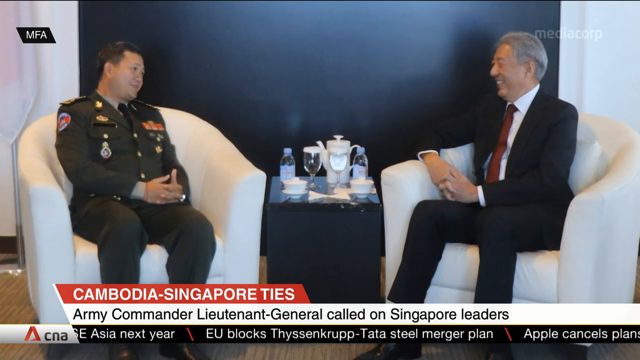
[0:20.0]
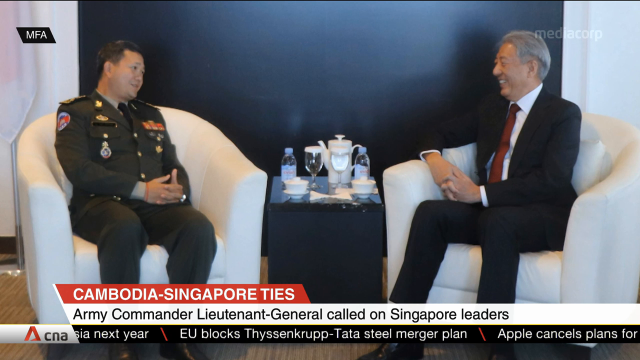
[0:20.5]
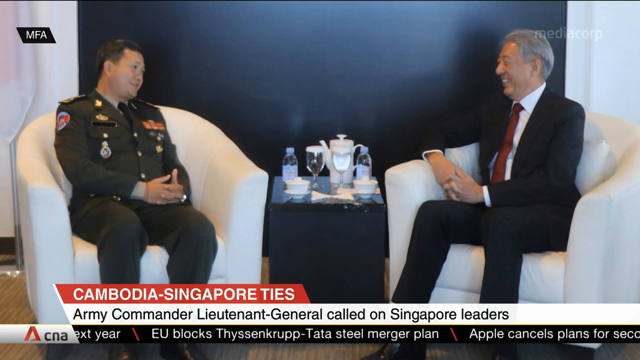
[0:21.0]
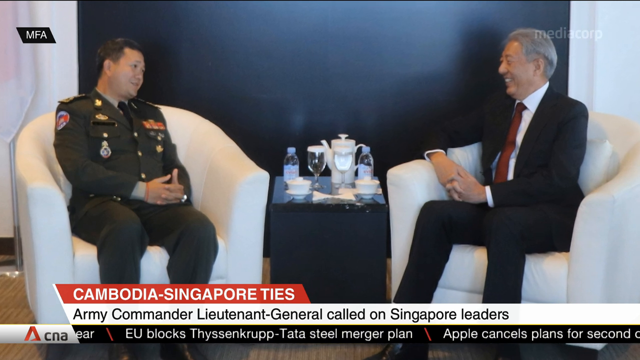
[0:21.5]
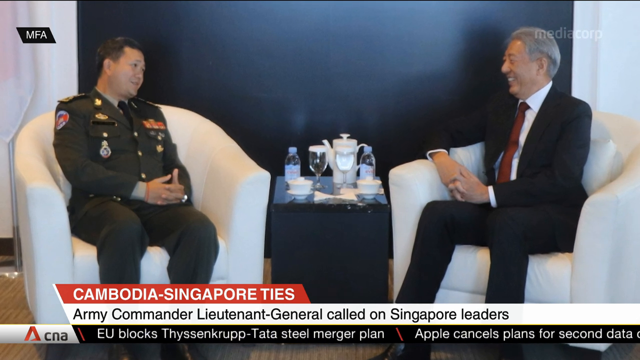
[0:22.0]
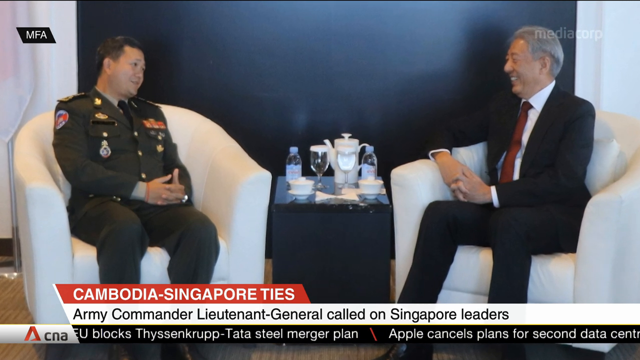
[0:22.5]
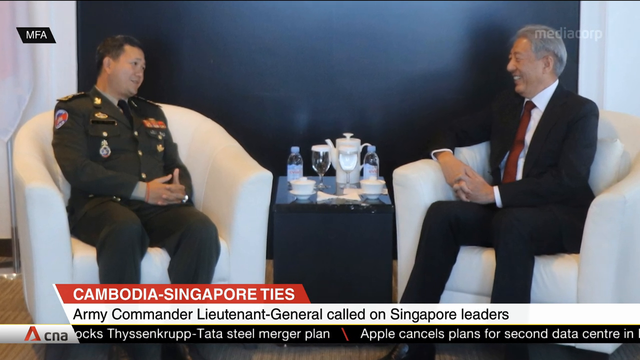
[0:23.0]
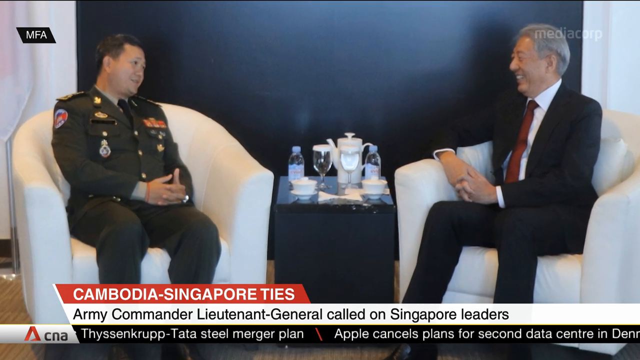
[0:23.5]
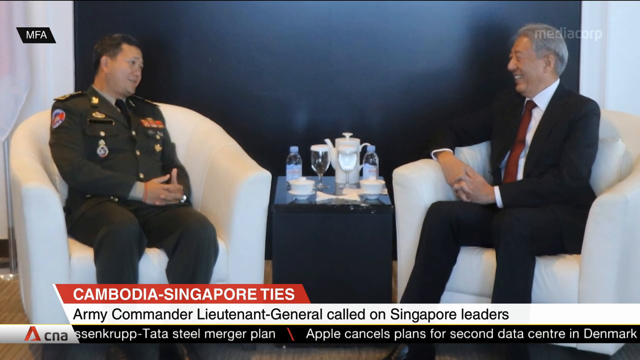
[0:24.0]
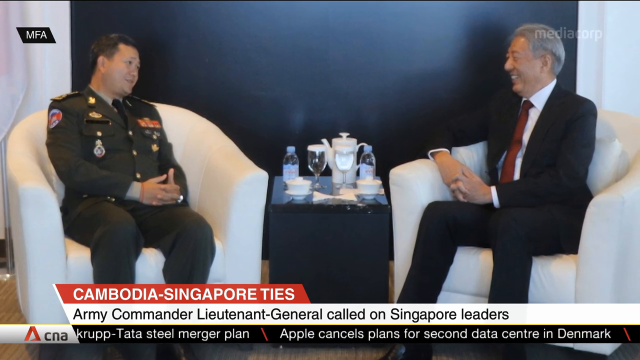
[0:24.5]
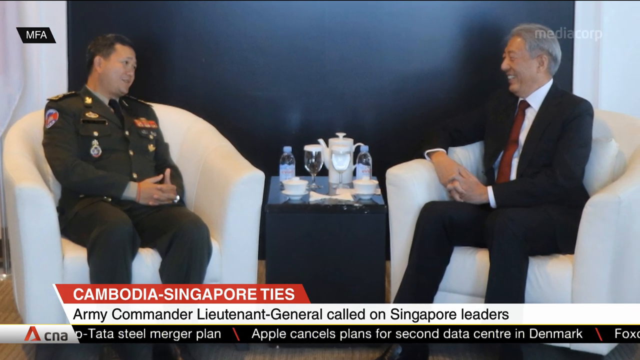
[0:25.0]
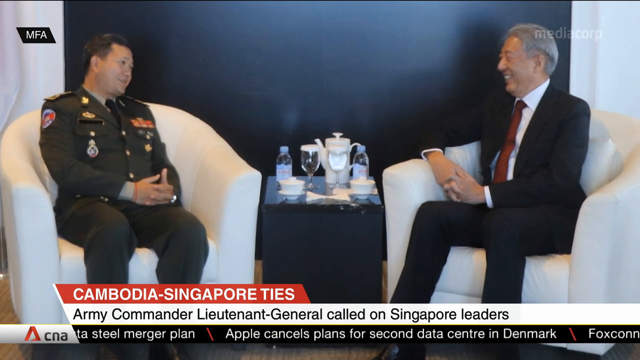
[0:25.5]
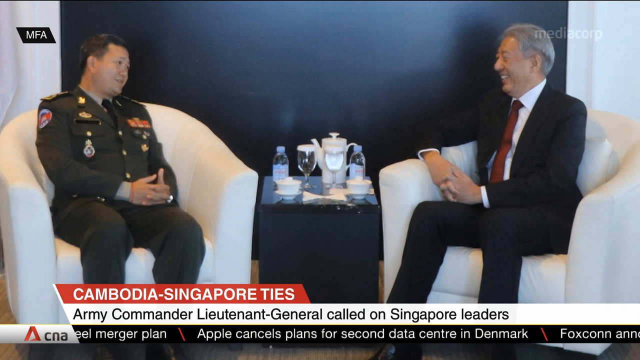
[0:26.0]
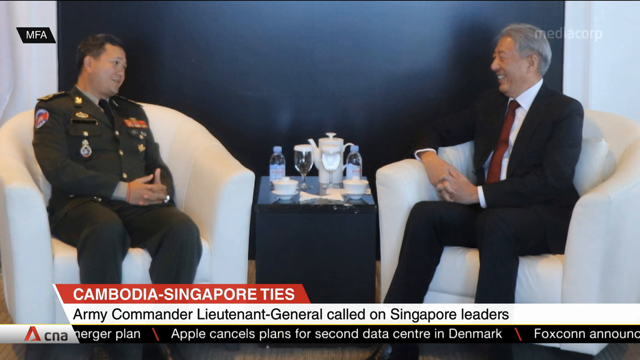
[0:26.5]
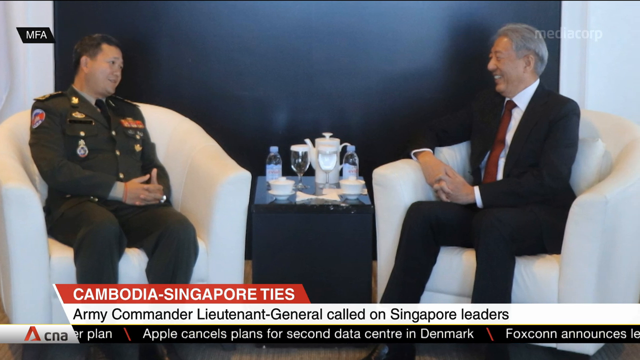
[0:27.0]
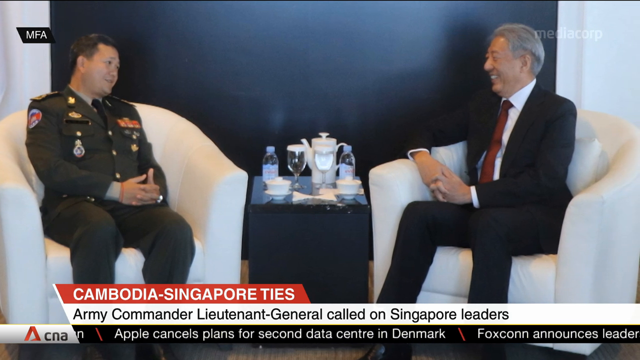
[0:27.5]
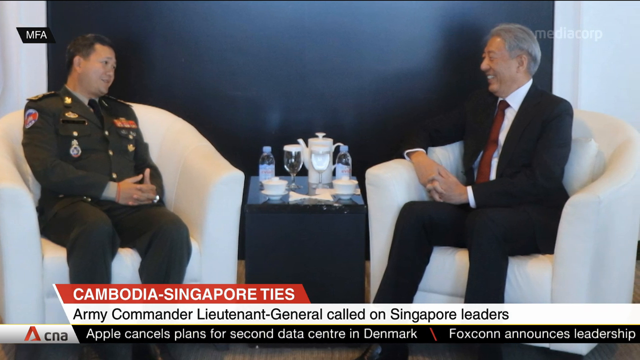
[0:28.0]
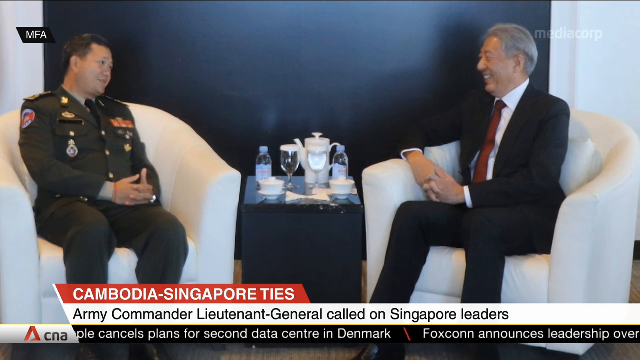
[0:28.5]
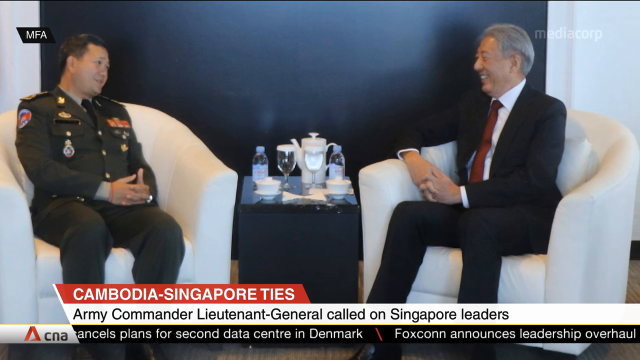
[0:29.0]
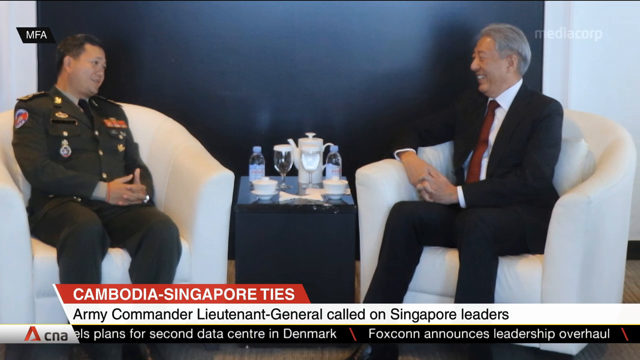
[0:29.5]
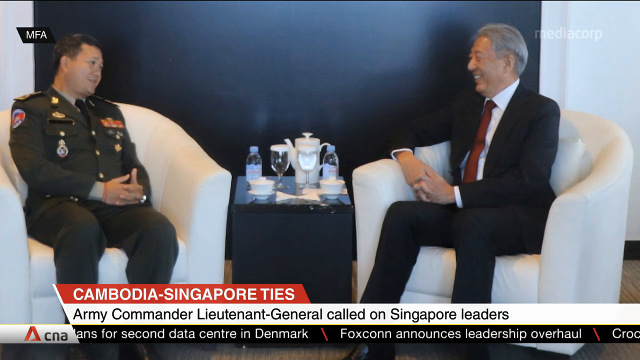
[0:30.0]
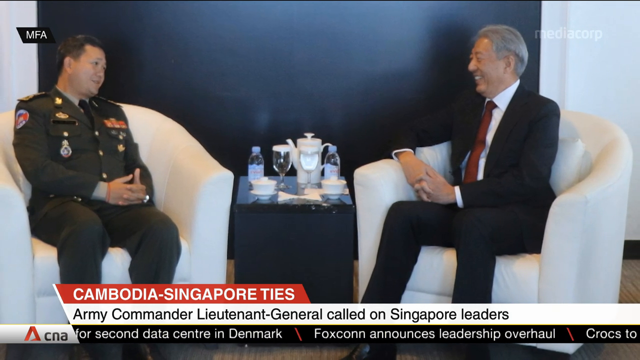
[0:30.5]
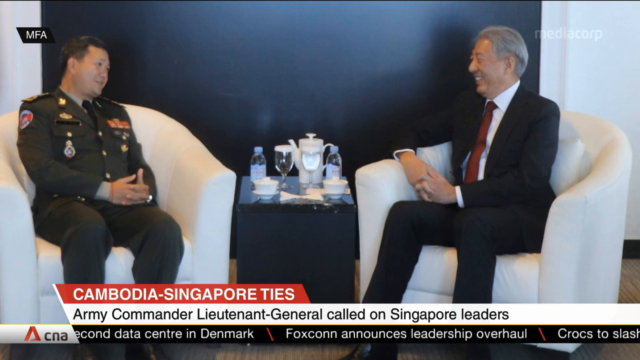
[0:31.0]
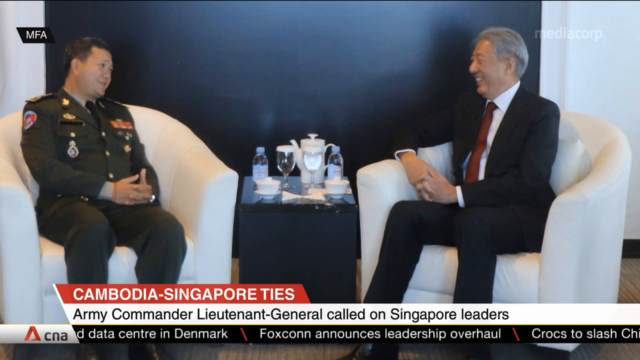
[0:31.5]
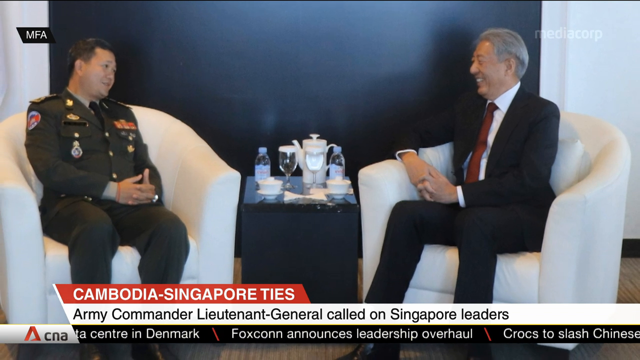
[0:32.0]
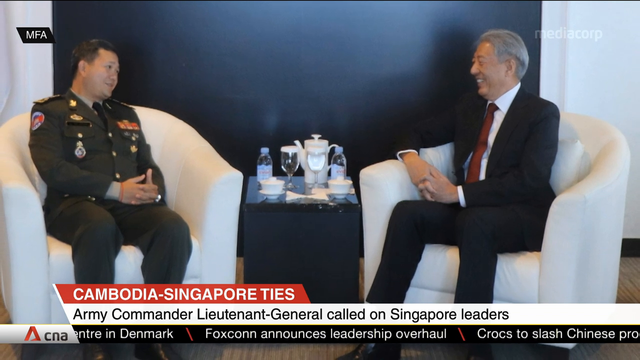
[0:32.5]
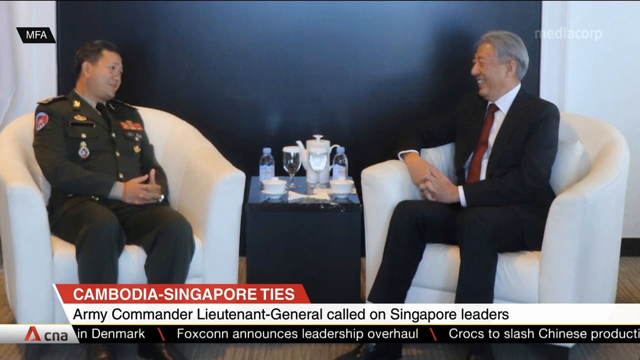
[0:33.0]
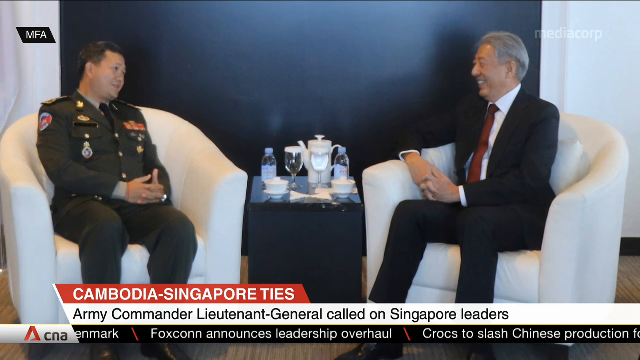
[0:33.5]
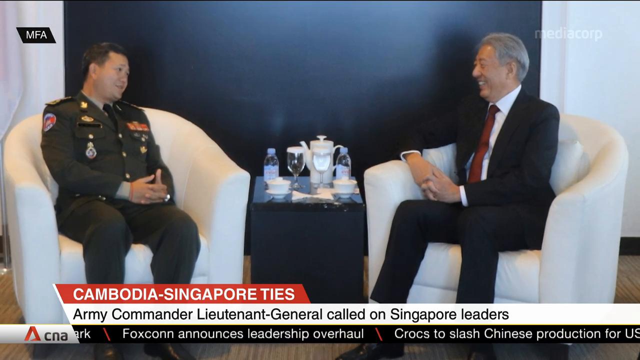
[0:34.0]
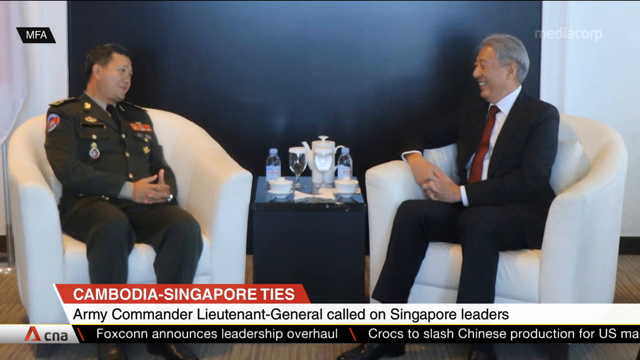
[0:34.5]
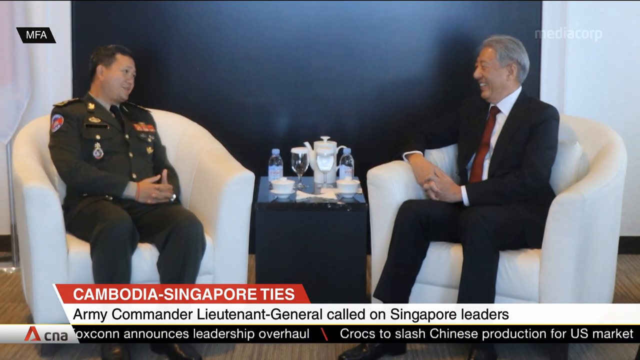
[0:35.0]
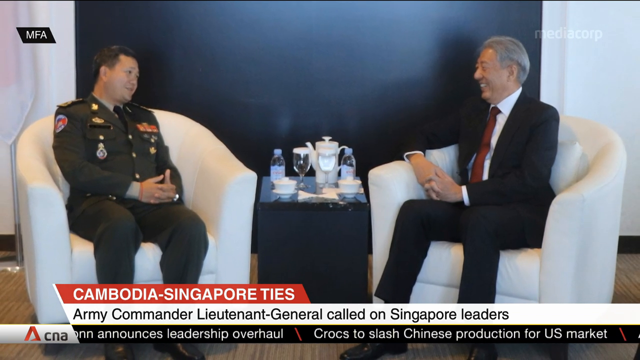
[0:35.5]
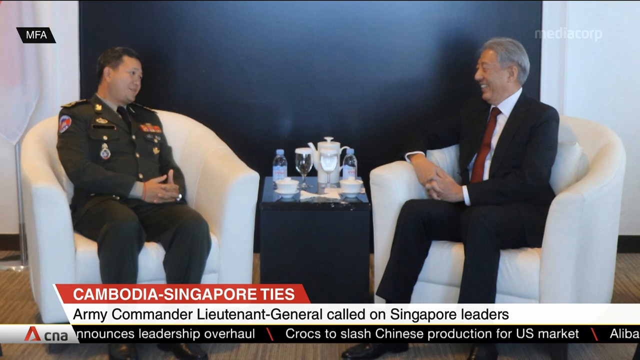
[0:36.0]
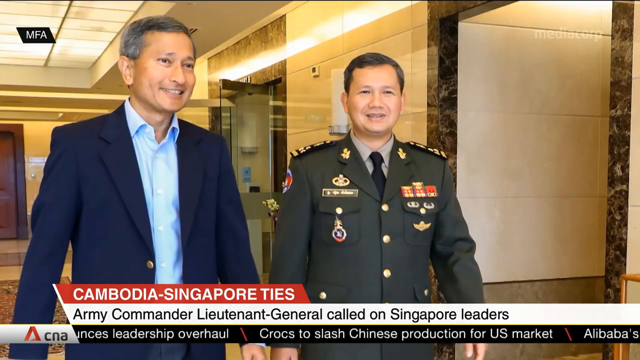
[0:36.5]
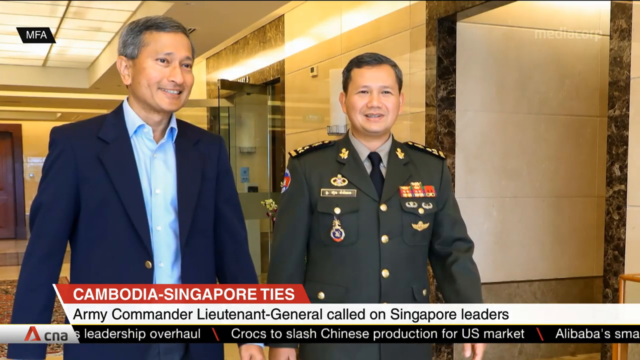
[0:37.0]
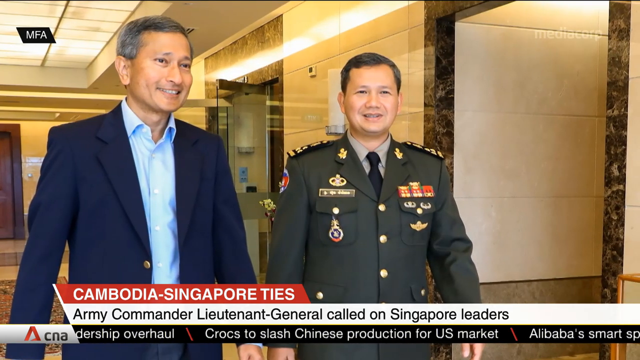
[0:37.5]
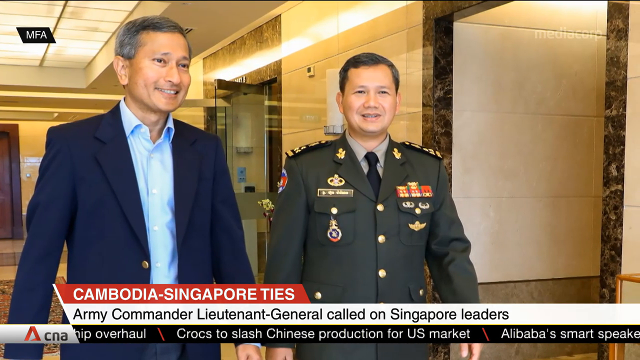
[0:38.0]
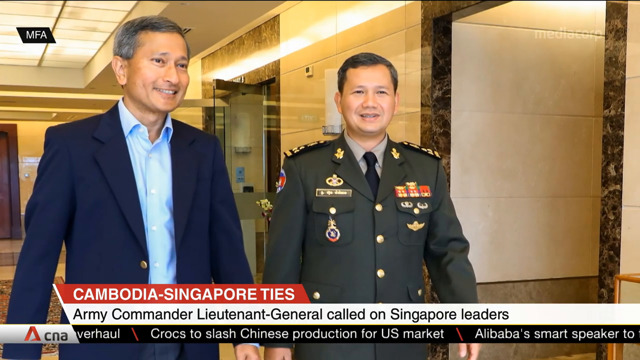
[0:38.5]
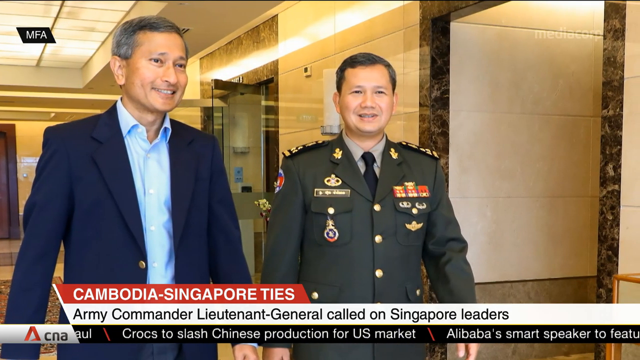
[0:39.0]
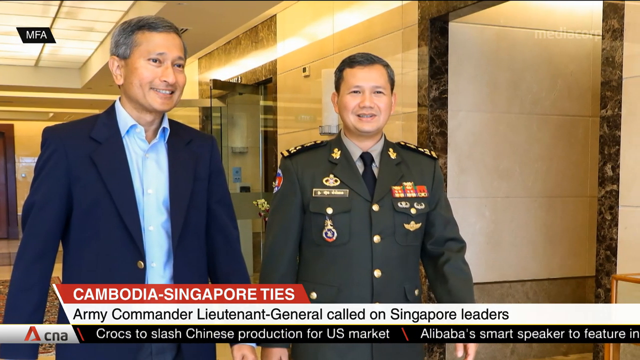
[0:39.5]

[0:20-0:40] A static image shows two men sitting across from each other in white chairs against a black wall, both with their hands clasped in front of them. The man on the left wears a dark green military uniform with several medals on the jacket, a light brown shirt and a black tie. The man on the right wears a navy blue suit with a white shirt and a red tie; his right arm is resting on the right armrest of the chair, with the hand clasped in front of him. Between the two men is a black table with glasses of water and bottles of water. The image slowly zooms in and out, and a headline at the bottom of the screen reads "Cambodia Singapore Ties" in white lettering on a red background. The scene then transitions to another static image of two men in a hallway.